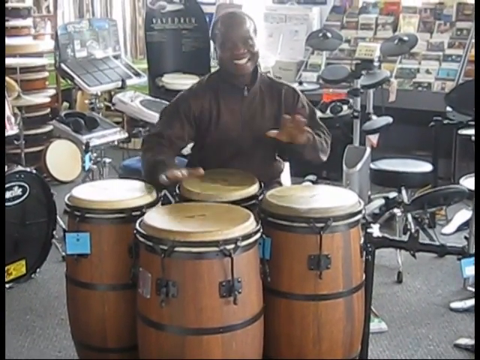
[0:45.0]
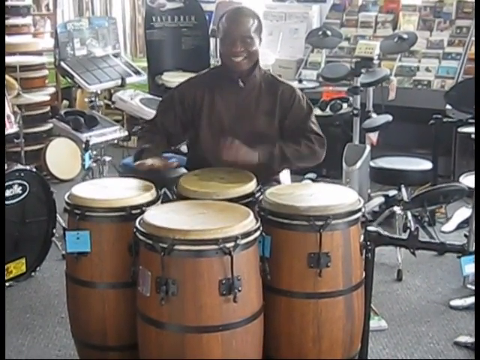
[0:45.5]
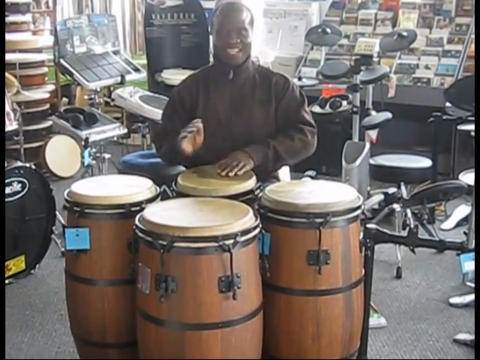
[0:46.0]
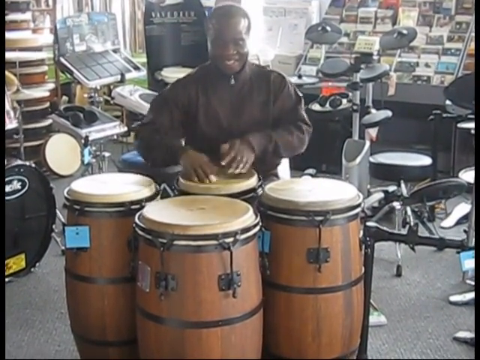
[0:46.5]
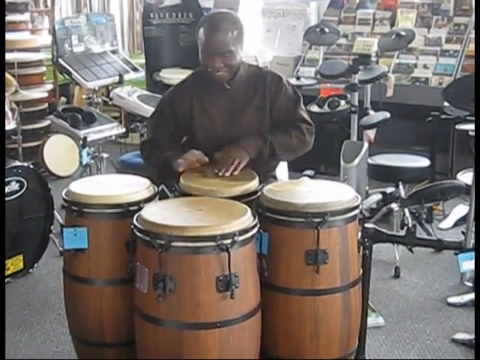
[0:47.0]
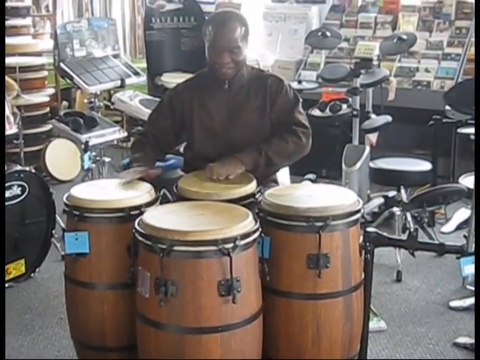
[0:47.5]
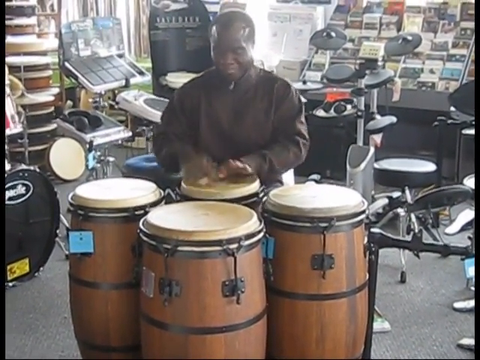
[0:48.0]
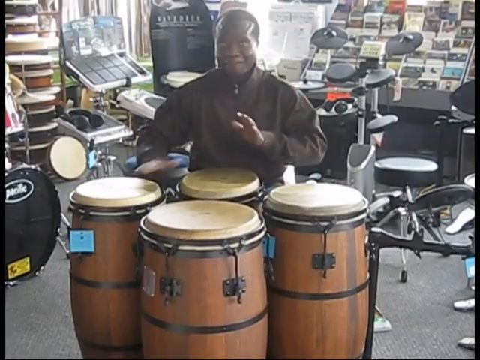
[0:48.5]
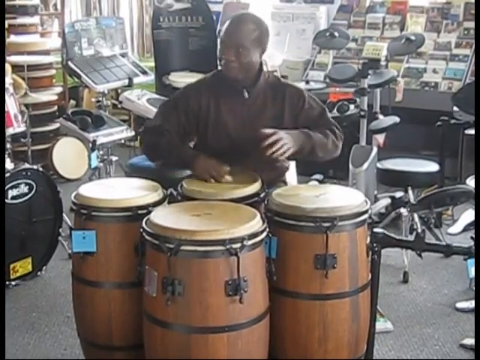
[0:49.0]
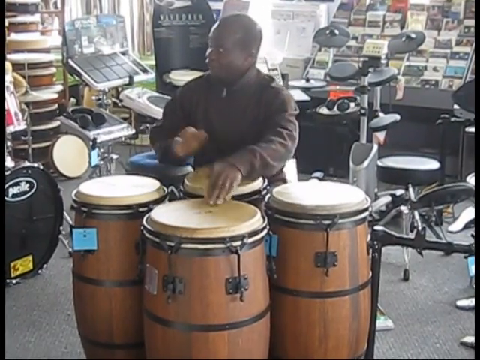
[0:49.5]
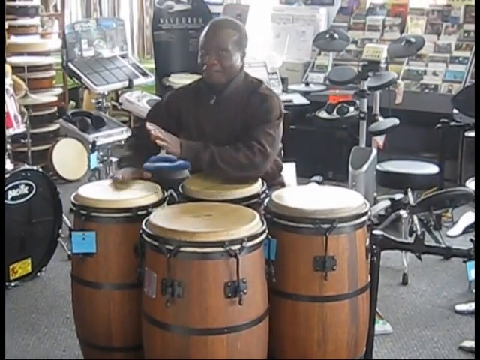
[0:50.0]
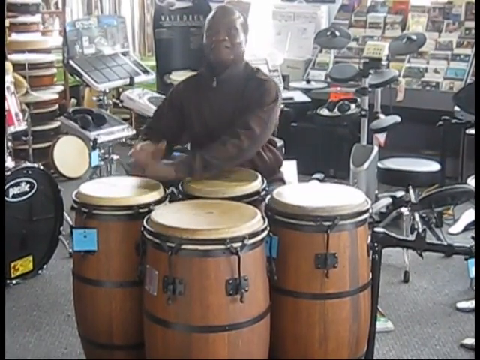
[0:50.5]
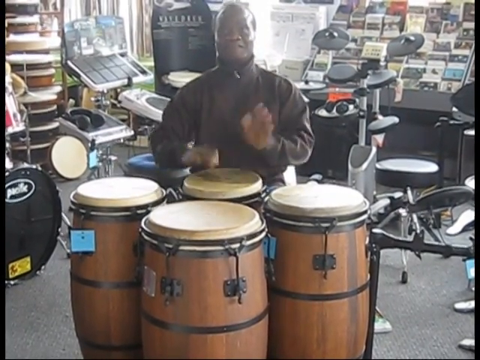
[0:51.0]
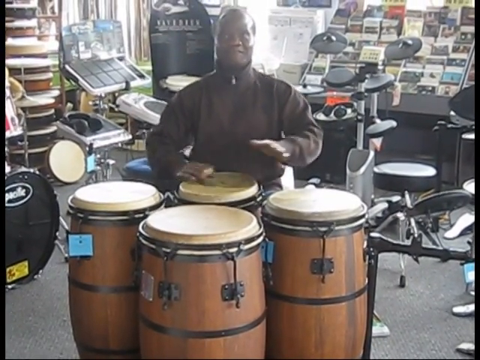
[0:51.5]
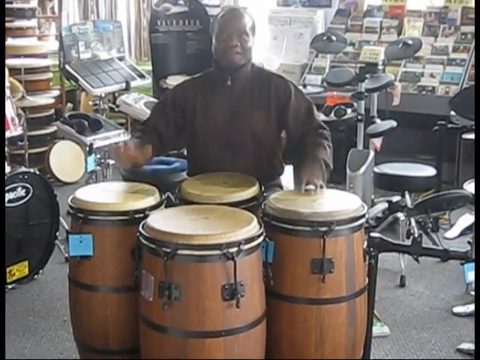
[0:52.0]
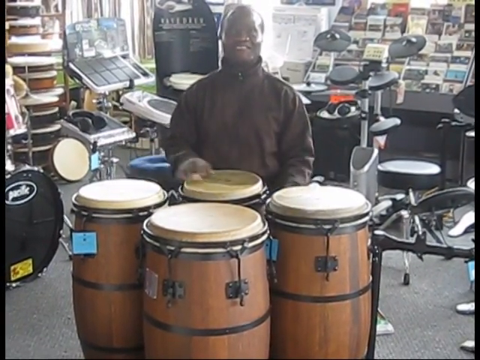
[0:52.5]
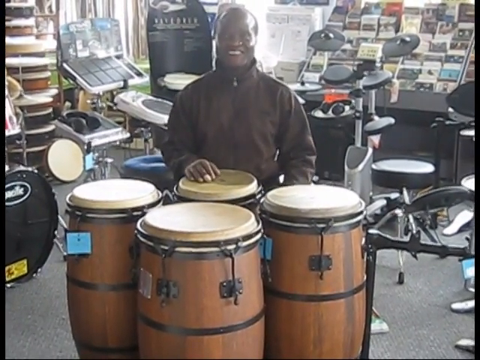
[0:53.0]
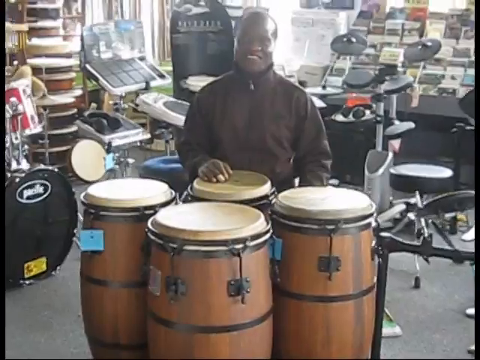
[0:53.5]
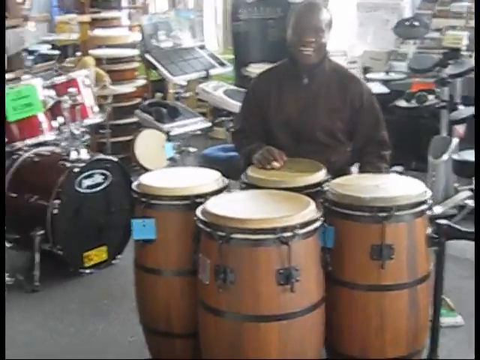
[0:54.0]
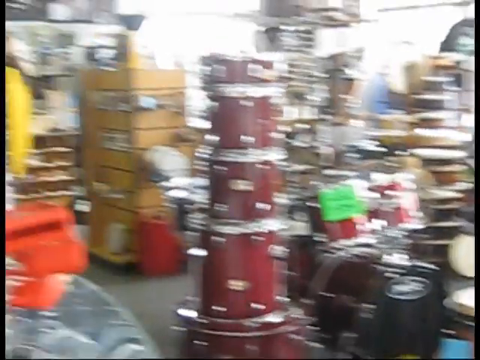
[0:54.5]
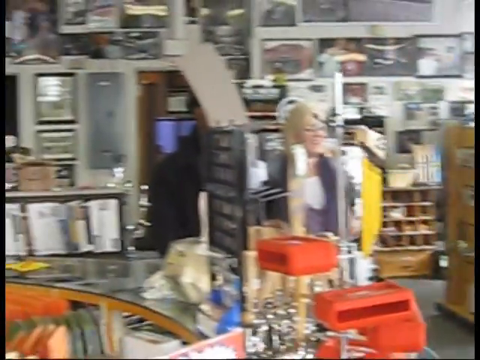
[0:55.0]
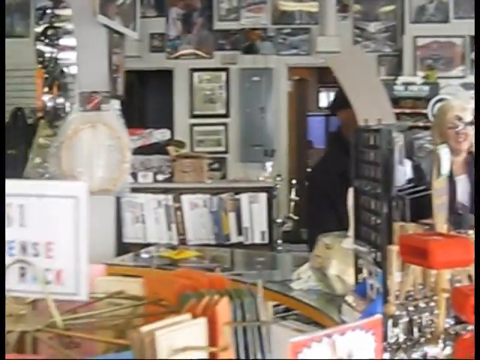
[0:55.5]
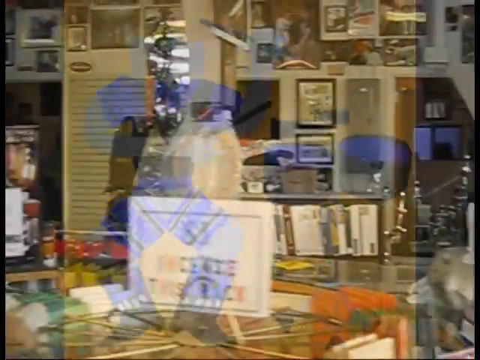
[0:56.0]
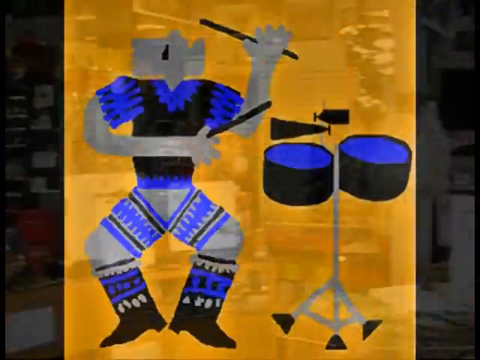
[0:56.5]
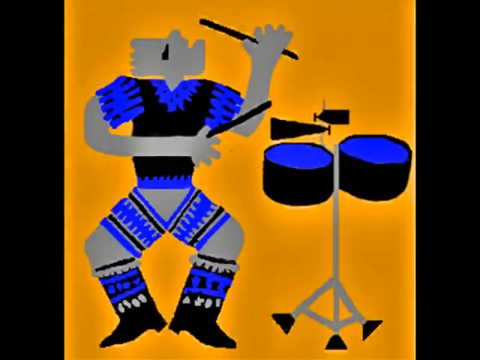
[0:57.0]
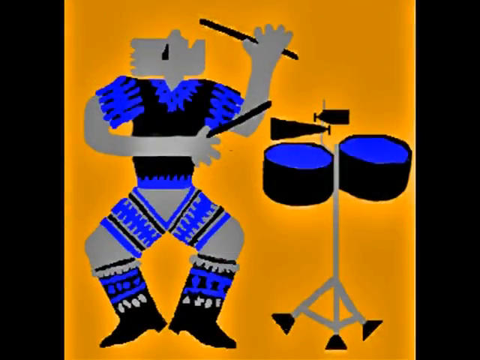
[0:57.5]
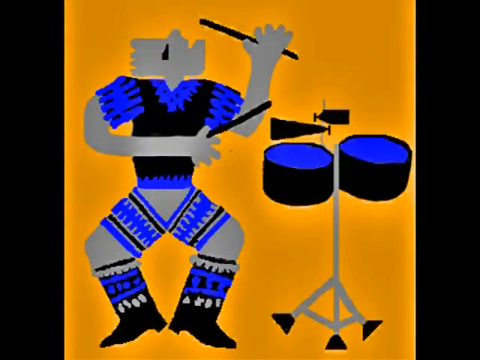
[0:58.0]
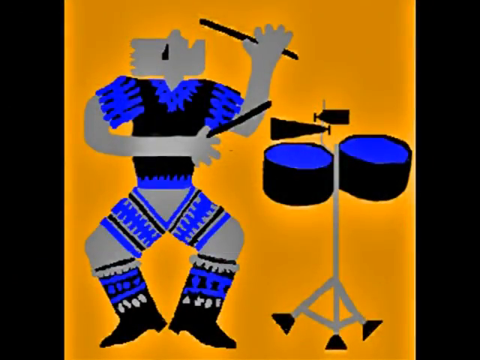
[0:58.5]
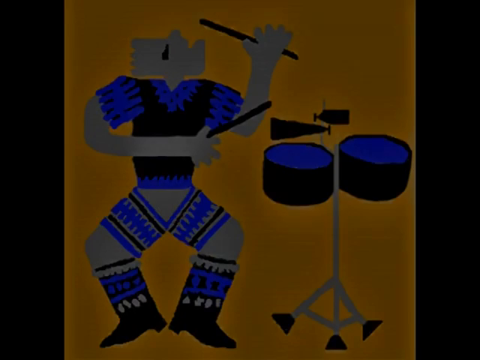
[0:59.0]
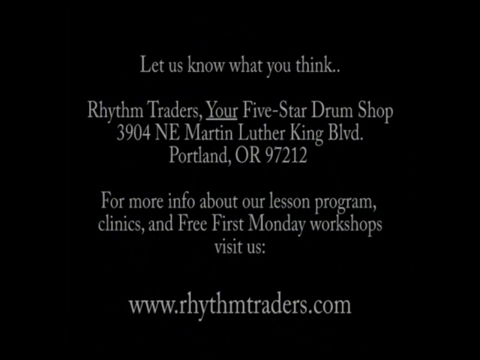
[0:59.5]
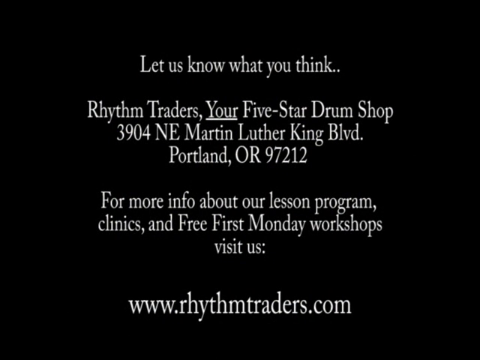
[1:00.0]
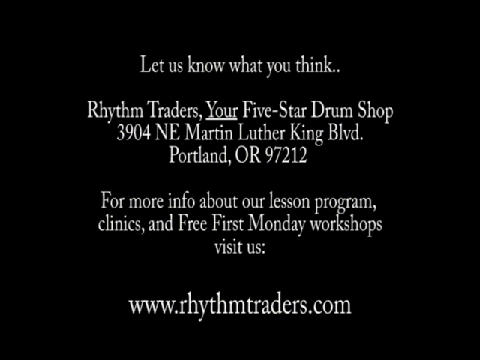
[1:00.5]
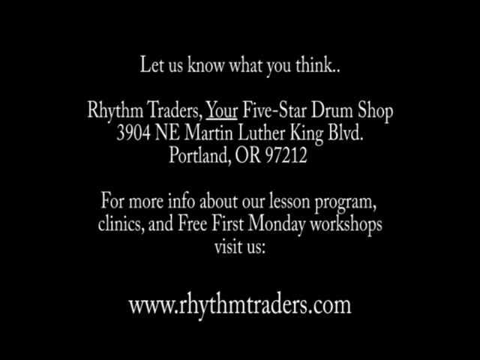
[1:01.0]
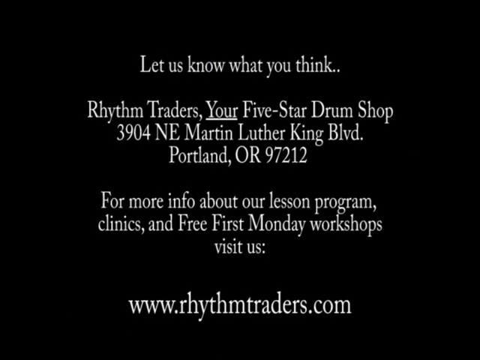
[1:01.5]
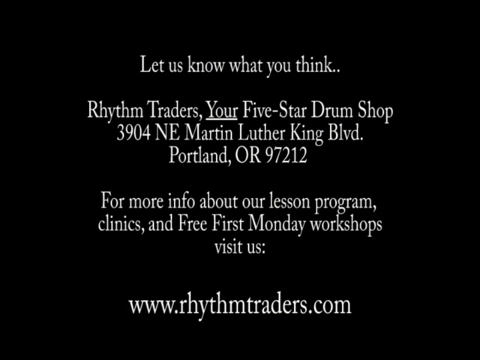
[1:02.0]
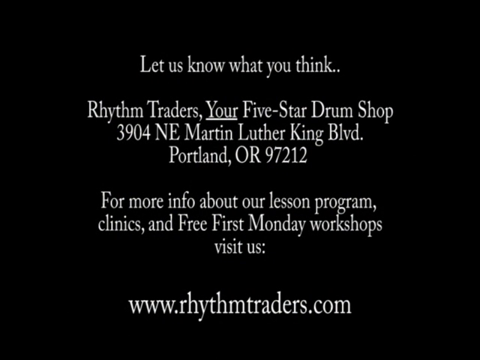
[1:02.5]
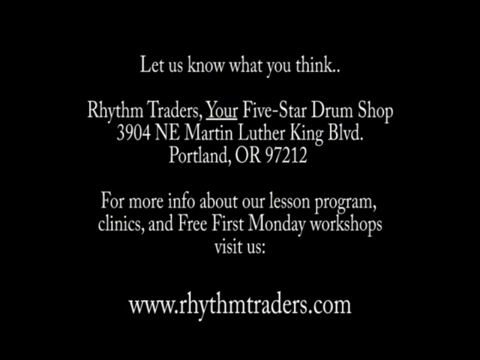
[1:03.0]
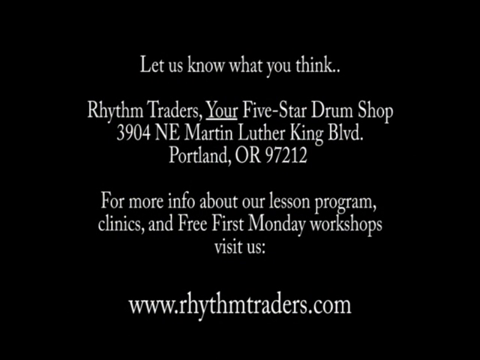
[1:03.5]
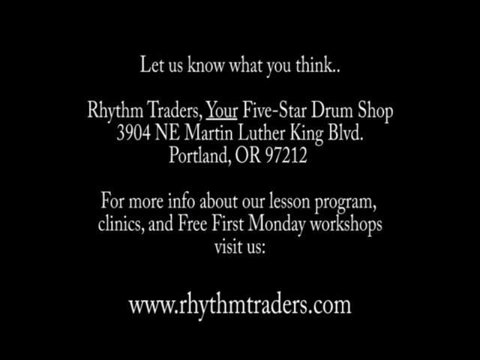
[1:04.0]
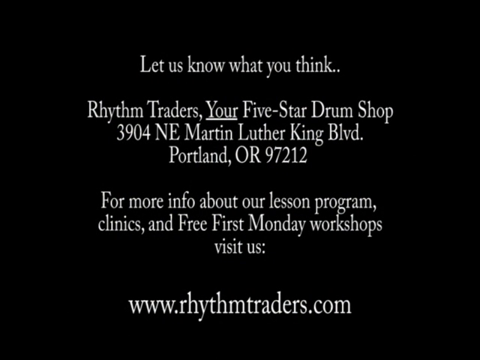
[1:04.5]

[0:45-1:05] The man seems to continue playing and then finishes. The camera turns towards an audience, and then a graphic shows a player playing the congas. He looks very happy as he finishes and seems proud of himself, and the people seem happy and are maybe clapping. It looks like a drum shop in Portland, Oregon, possibly being filmed as advertising for the shop. The shop looks very busy and full of items to purchase or look at.